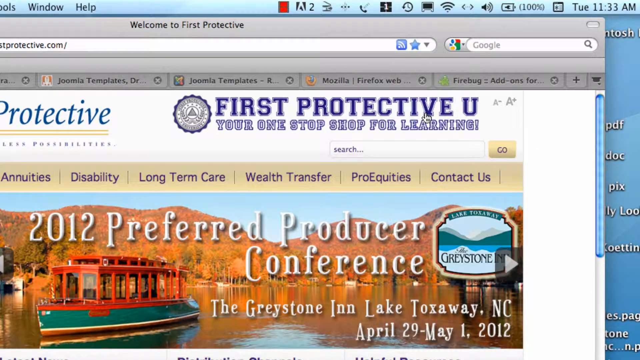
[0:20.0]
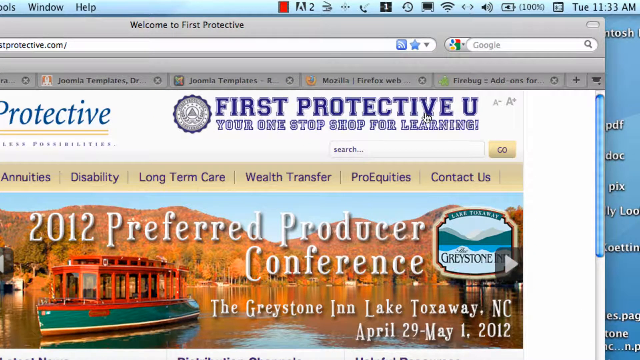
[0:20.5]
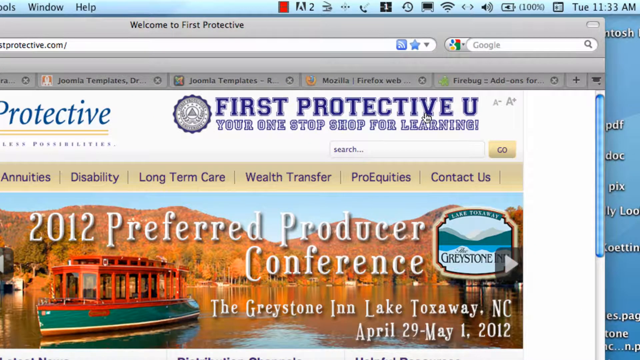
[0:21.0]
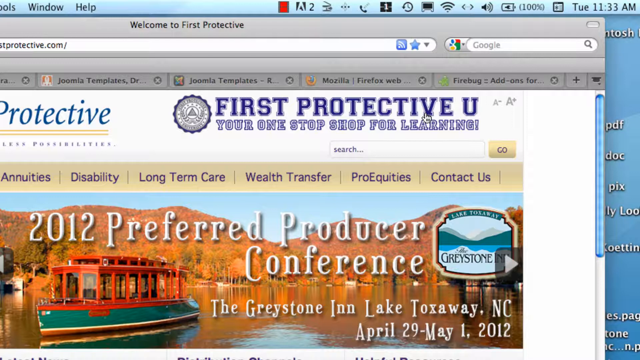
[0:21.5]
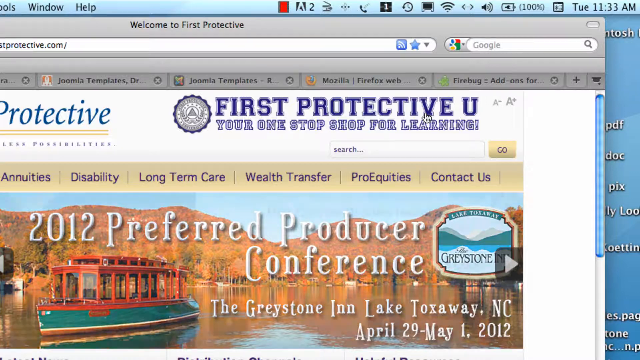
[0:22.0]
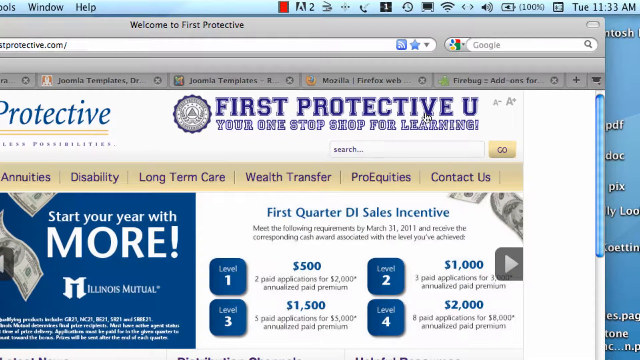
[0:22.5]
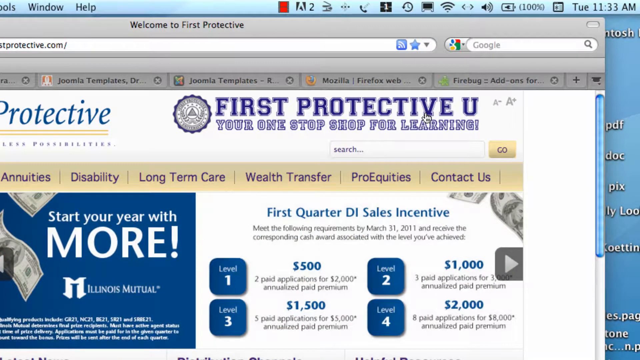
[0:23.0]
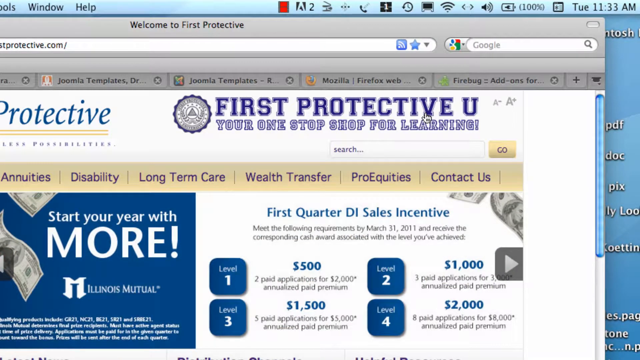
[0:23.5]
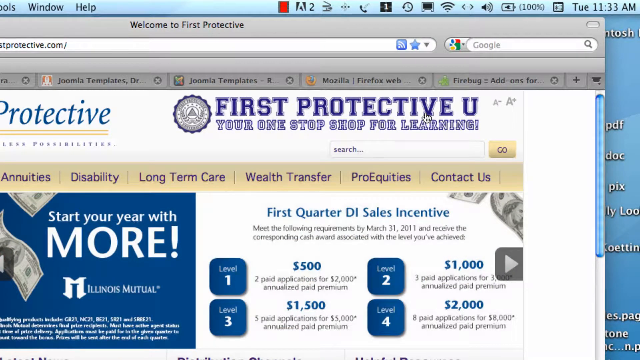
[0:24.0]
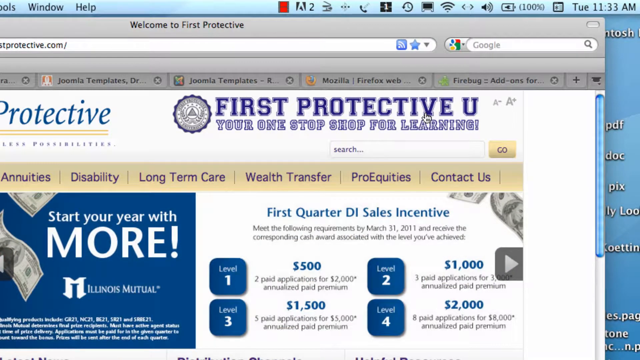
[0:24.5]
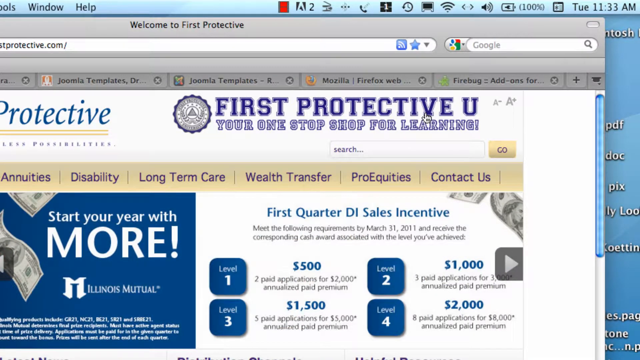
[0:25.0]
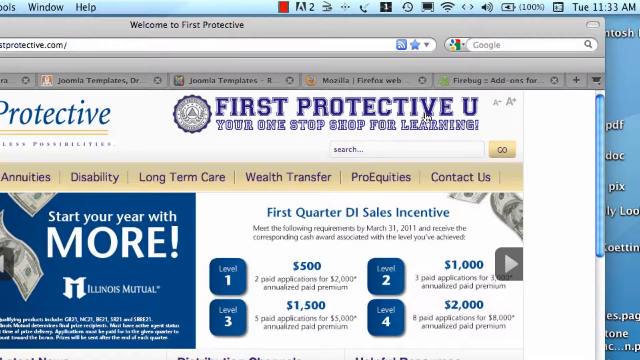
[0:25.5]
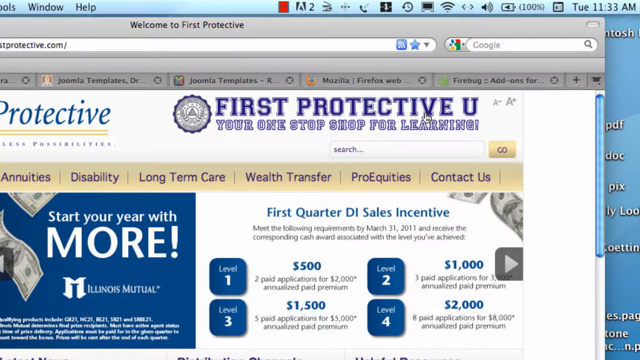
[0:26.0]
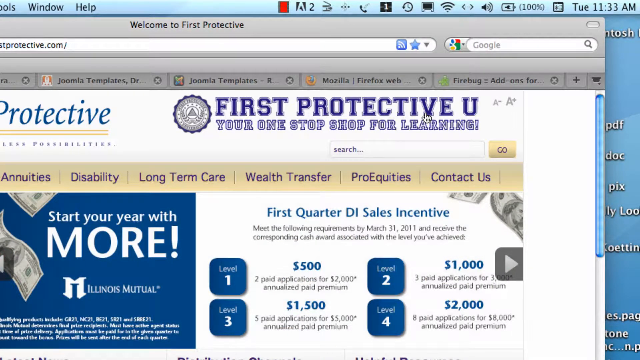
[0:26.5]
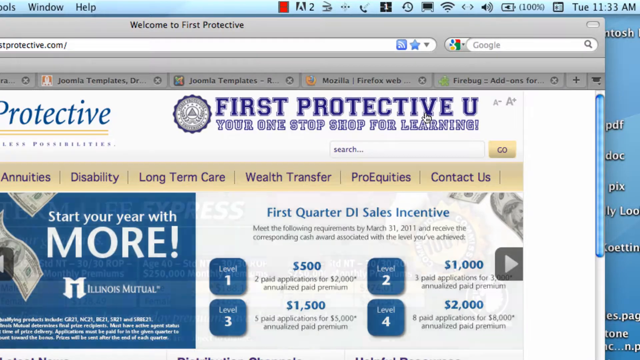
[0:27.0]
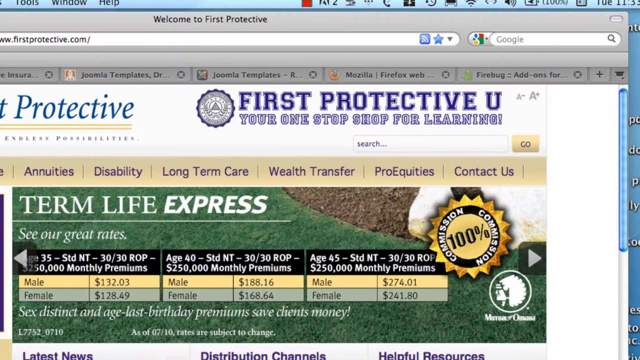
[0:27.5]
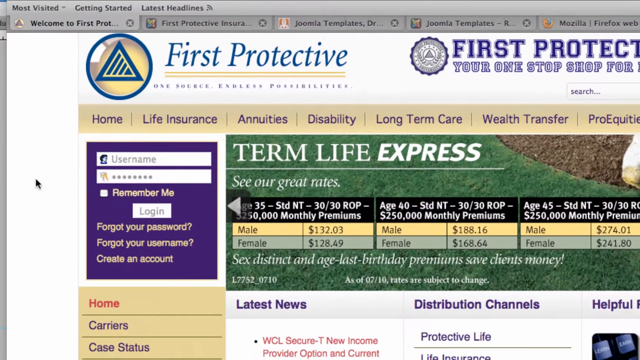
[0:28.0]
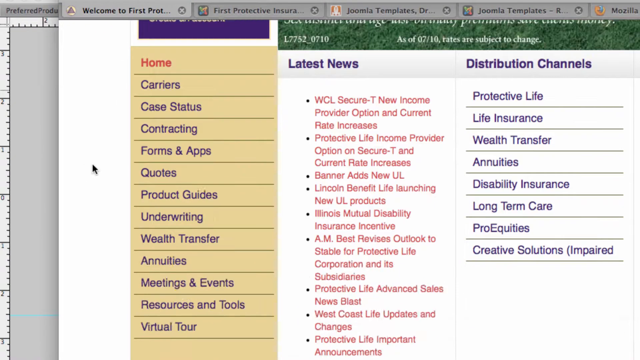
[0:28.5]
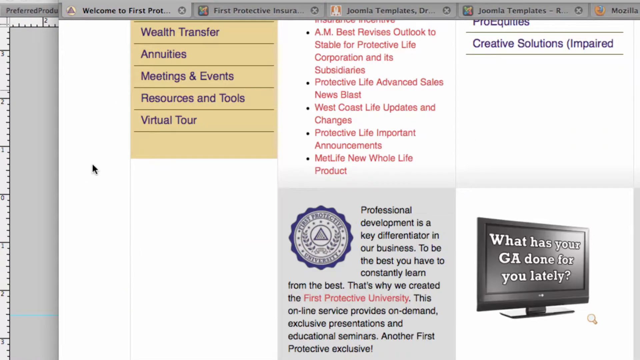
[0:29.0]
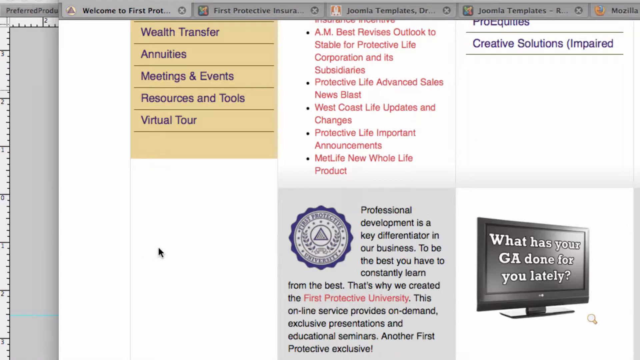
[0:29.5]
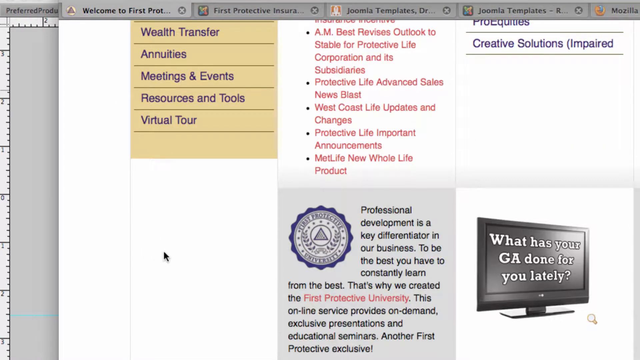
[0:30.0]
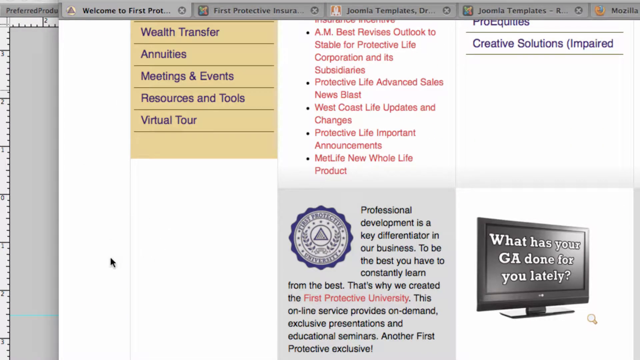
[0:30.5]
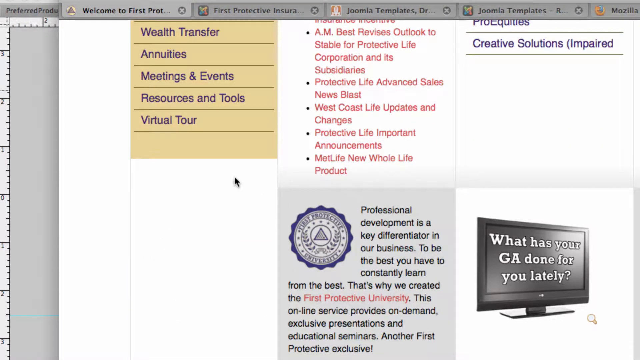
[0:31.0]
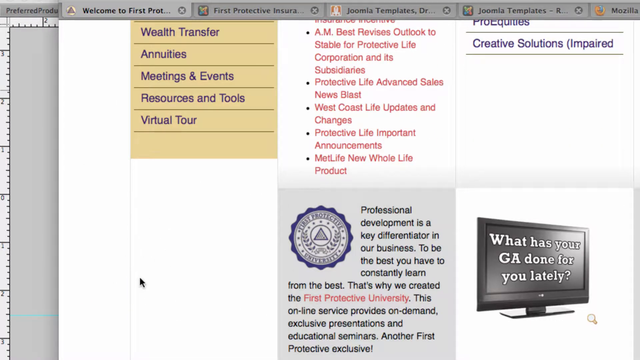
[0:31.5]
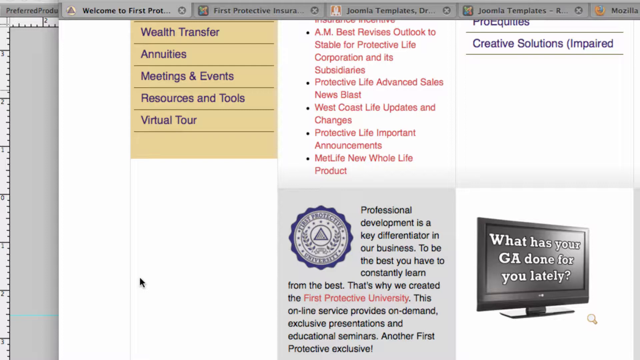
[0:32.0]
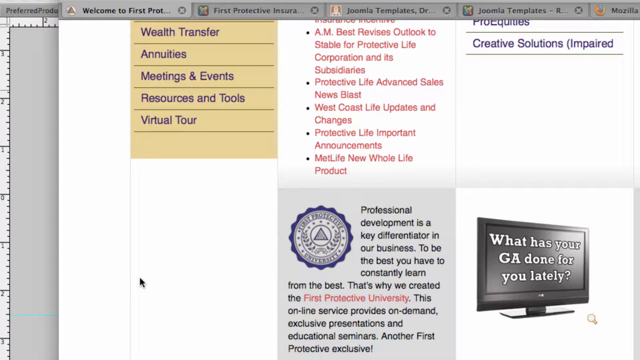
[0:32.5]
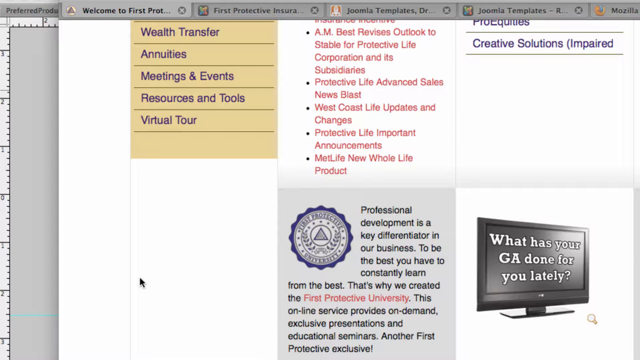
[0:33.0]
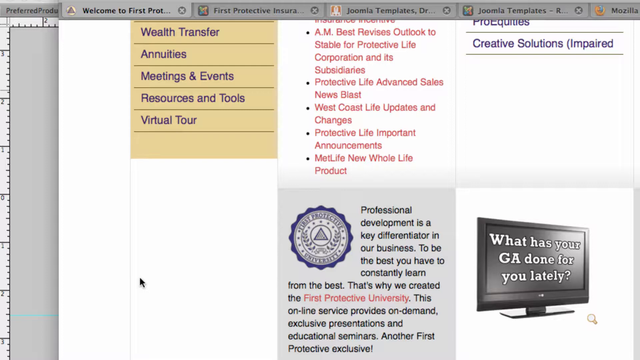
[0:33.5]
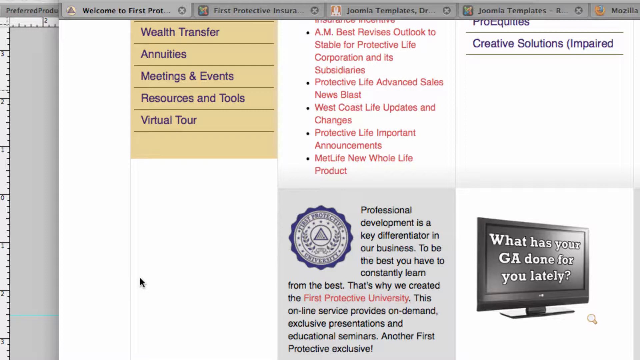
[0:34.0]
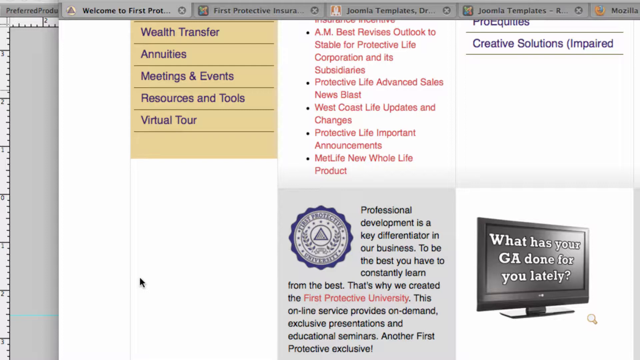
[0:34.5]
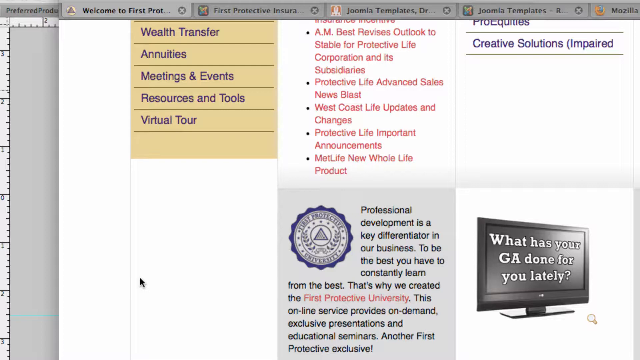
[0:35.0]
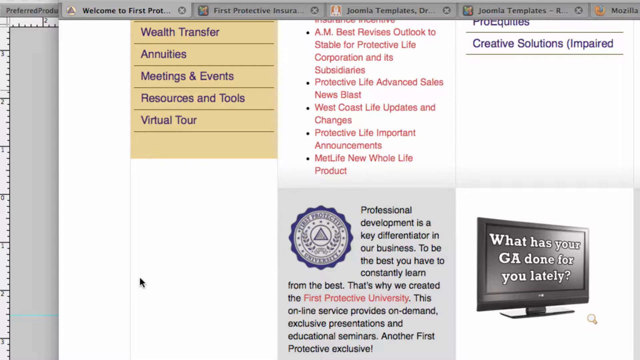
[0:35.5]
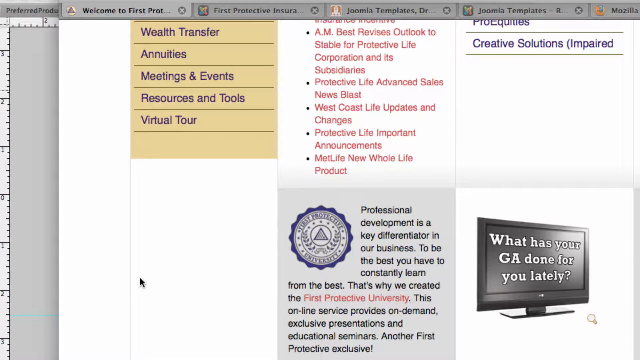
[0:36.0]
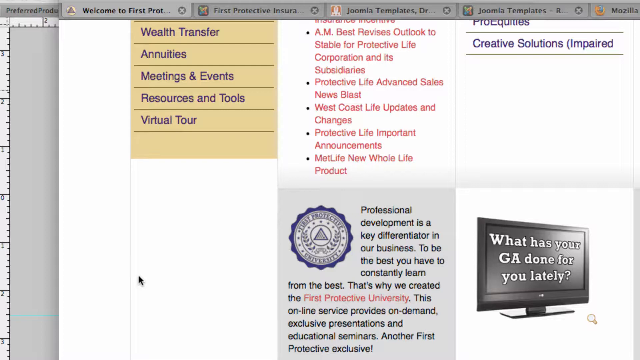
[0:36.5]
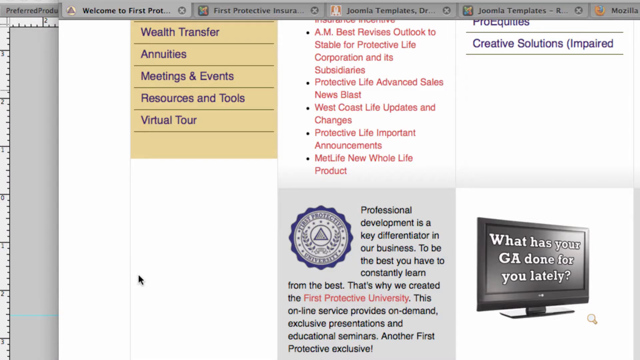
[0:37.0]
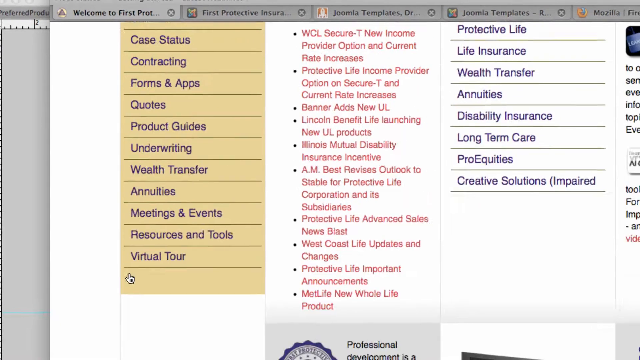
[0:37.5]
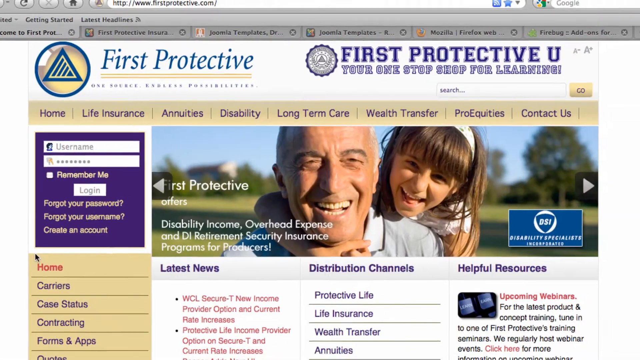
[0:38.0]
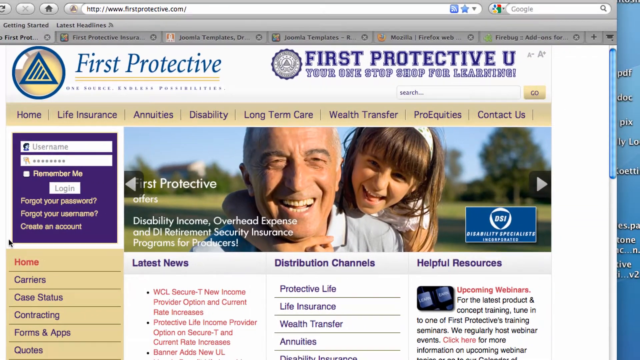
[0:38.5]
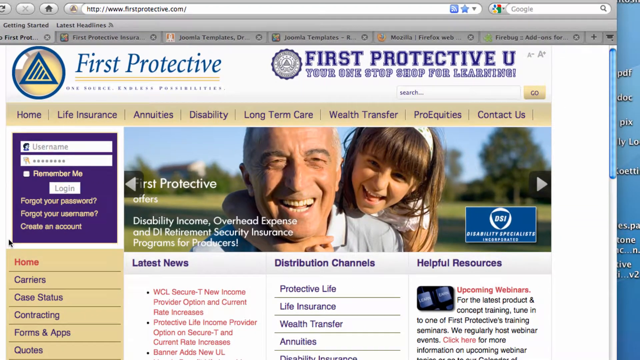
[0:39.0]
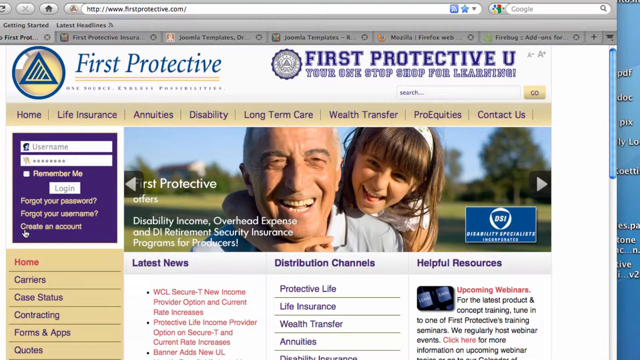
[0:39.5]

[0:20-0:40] The page zooms into the upper right-hand corner, and the mouse cursor, a black arrow, begins circling the protective view part of the page as the person reads the banner in the top right-hand corner. Beneath that is a search bar. The tree image beneath the protective view then changes into a blue screen with money in the background and the text "start your year with more Illinois Mutual." The person scrolls down to the lower left part of the page, the cursor following along and then moving in a circle. To the right of that is a blue shield that says "Professional Development is a key differentiator in our business to be the best you have to constantly learn from the best. That's why we created the first Protective University."